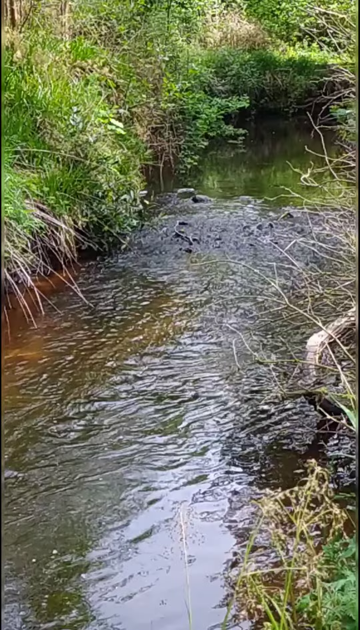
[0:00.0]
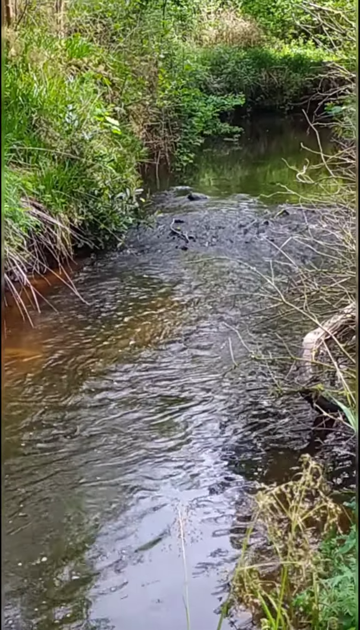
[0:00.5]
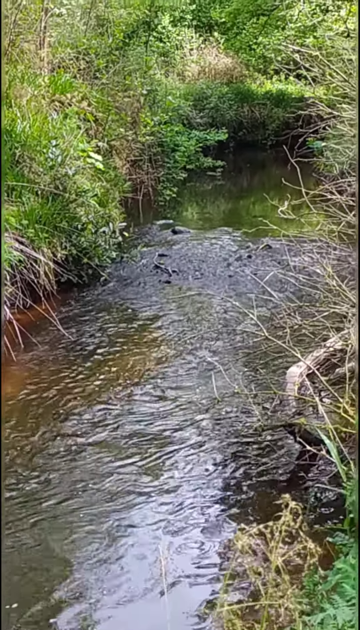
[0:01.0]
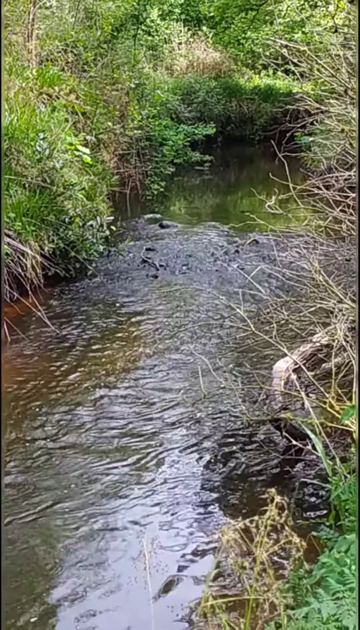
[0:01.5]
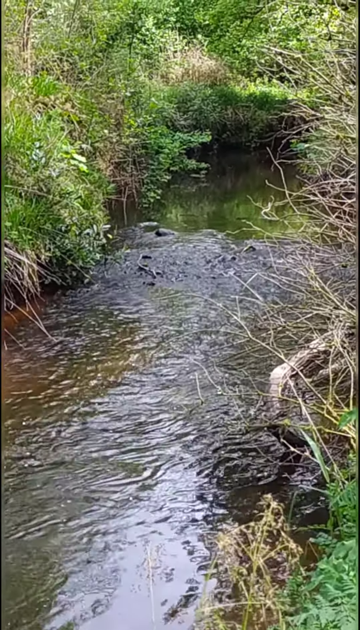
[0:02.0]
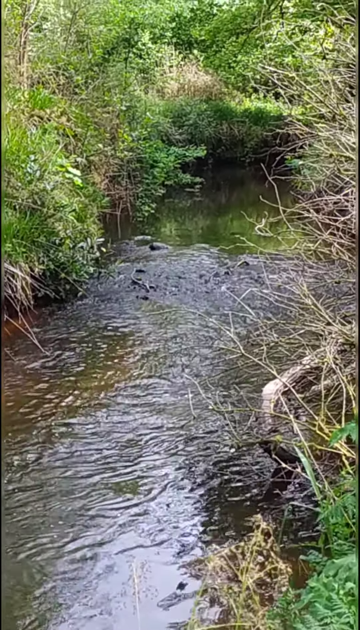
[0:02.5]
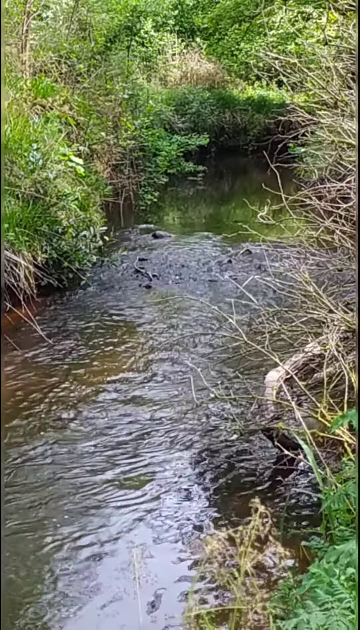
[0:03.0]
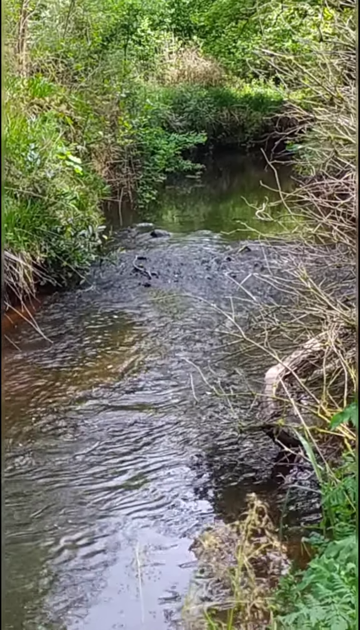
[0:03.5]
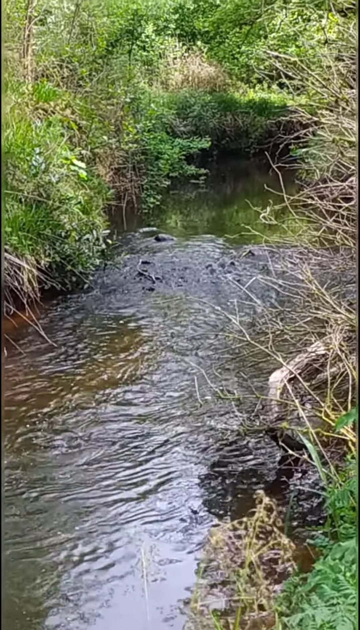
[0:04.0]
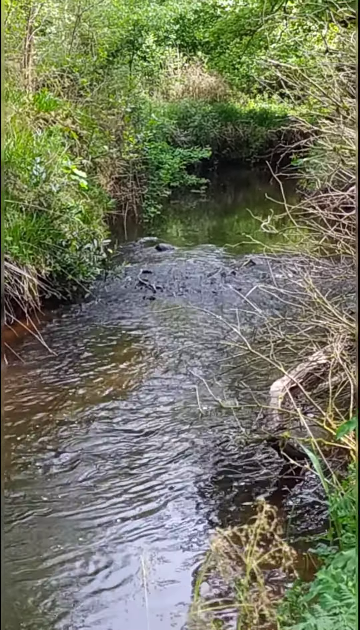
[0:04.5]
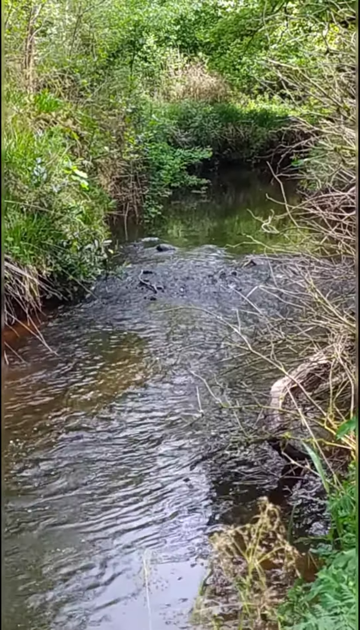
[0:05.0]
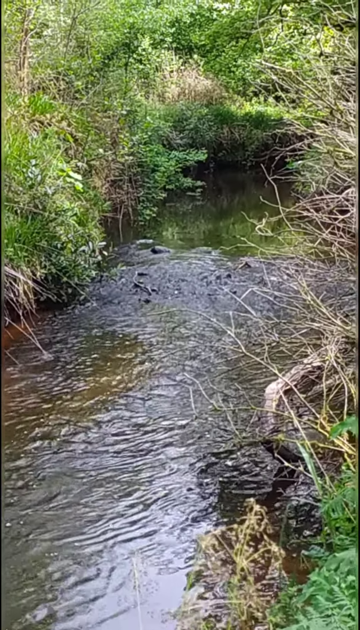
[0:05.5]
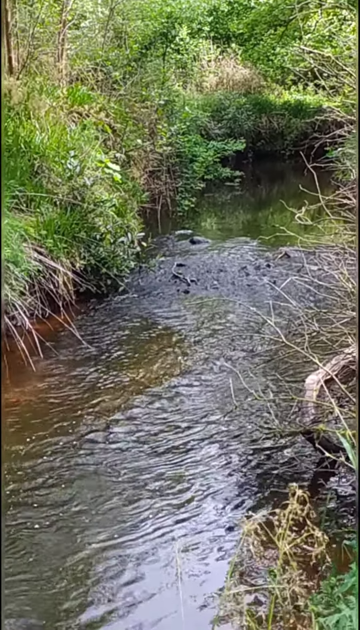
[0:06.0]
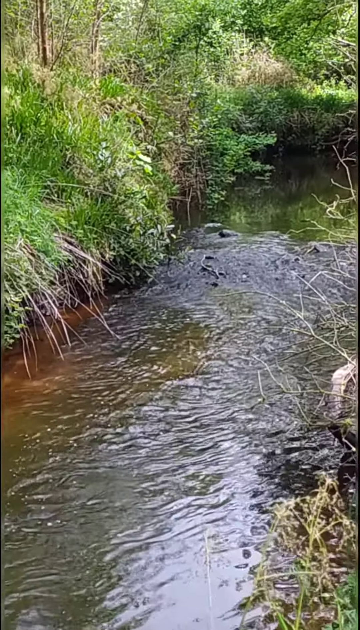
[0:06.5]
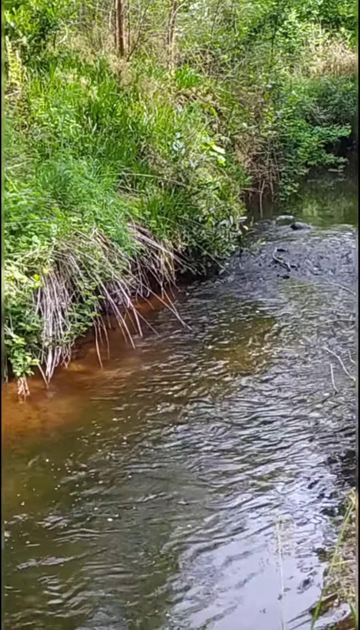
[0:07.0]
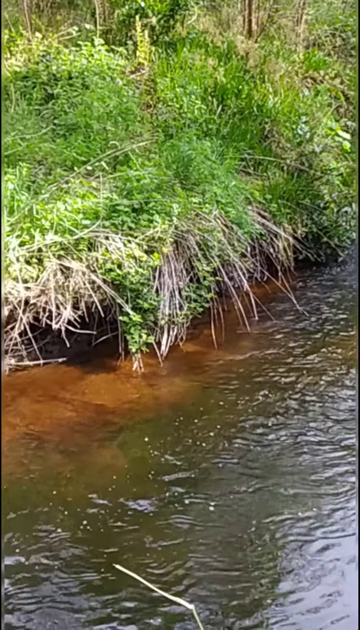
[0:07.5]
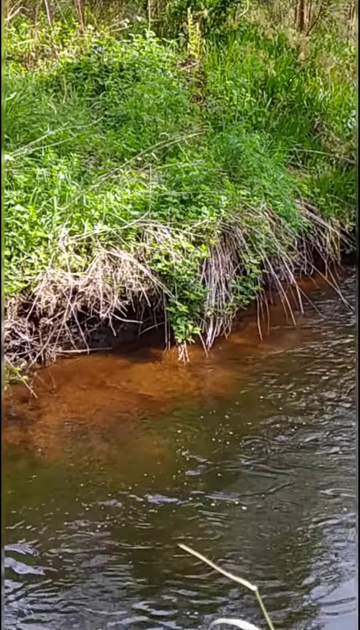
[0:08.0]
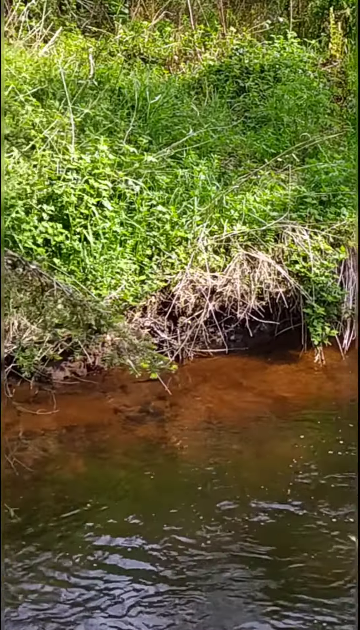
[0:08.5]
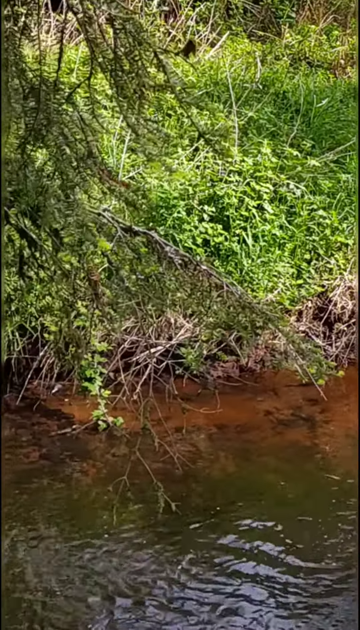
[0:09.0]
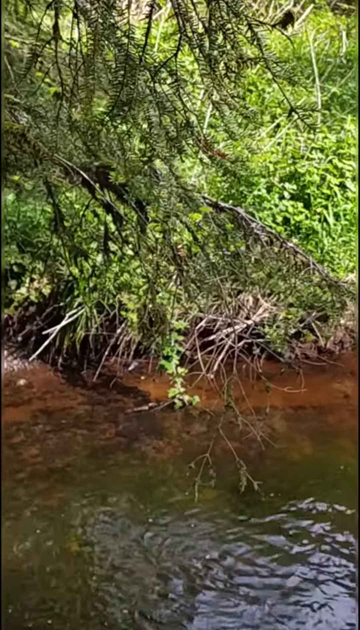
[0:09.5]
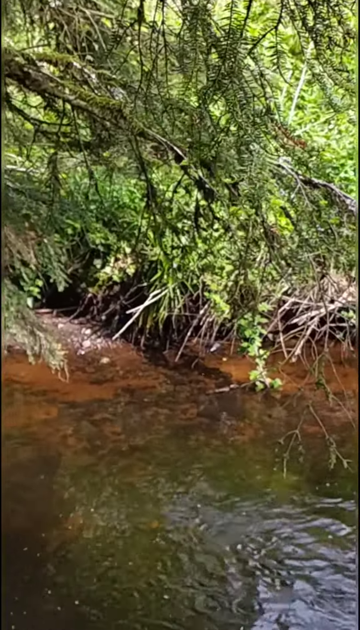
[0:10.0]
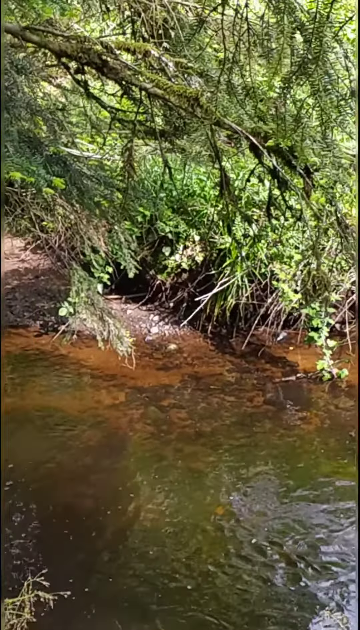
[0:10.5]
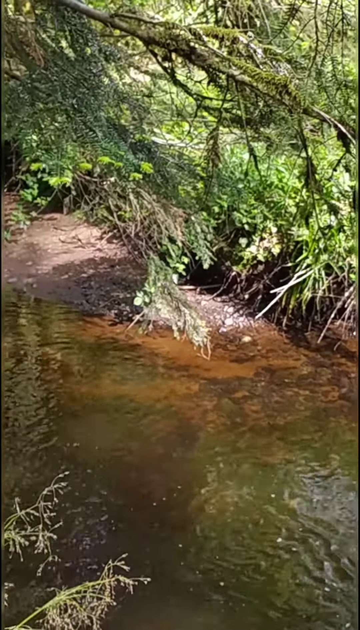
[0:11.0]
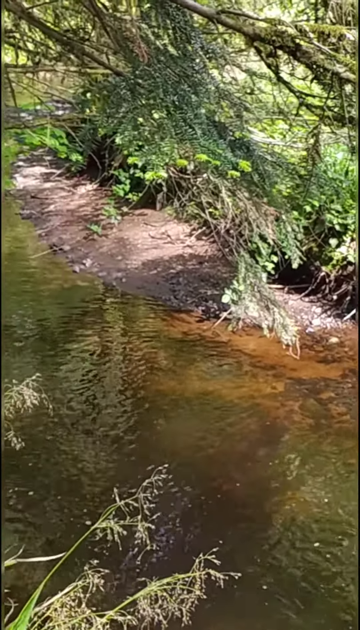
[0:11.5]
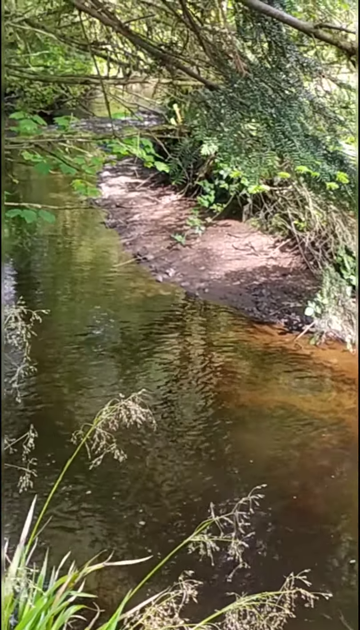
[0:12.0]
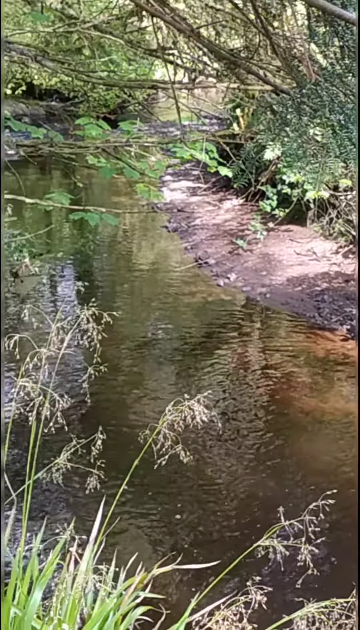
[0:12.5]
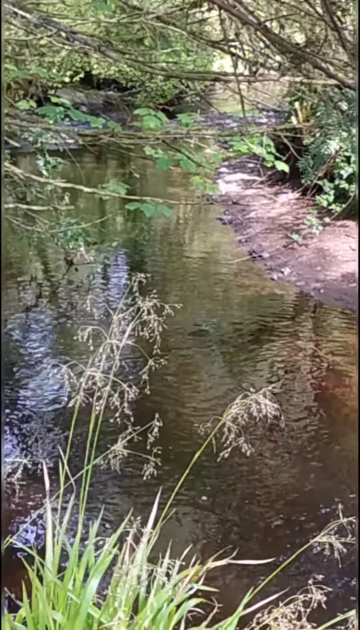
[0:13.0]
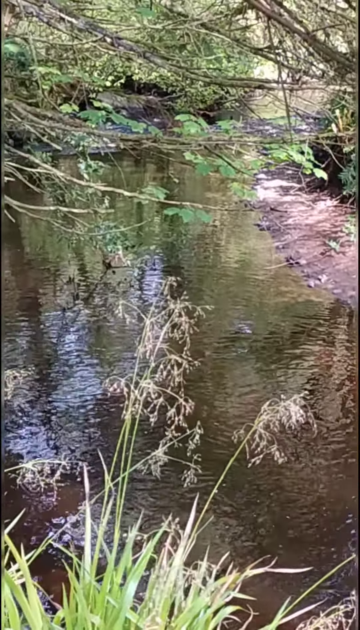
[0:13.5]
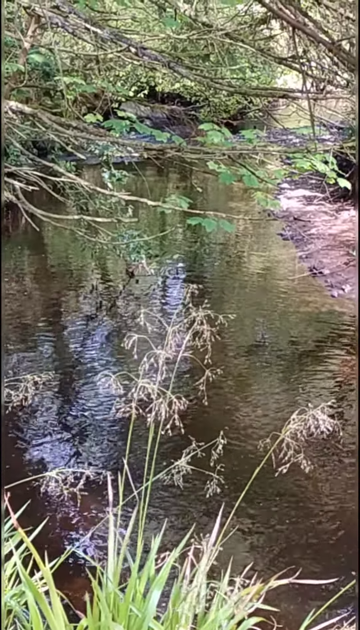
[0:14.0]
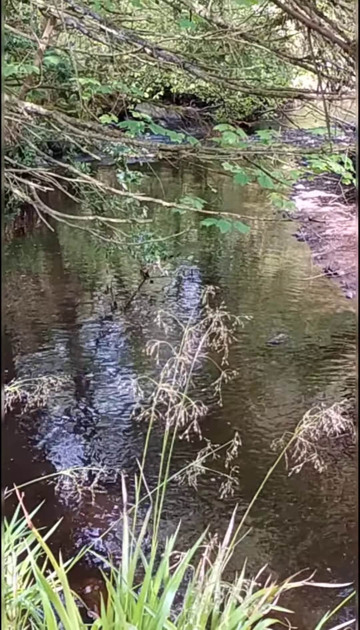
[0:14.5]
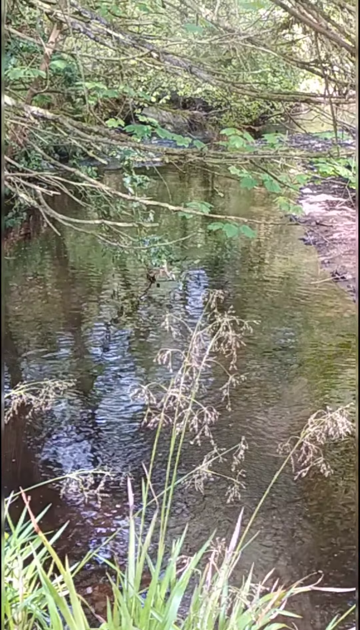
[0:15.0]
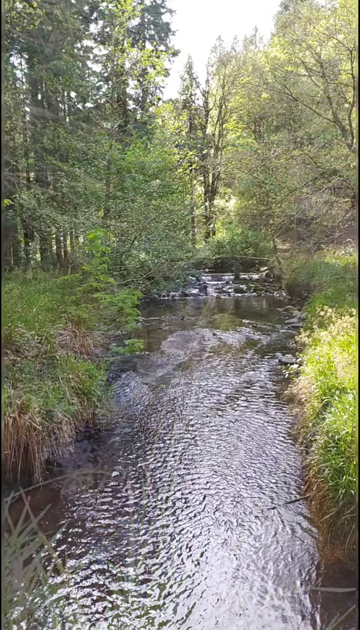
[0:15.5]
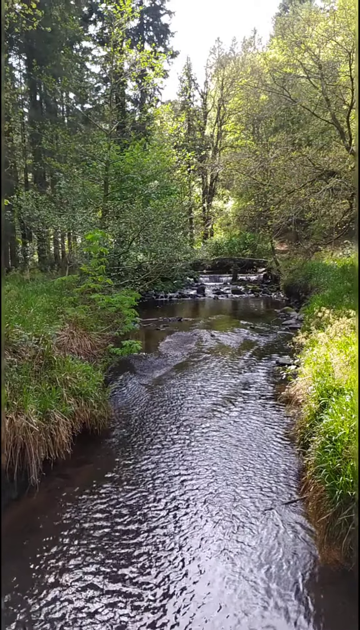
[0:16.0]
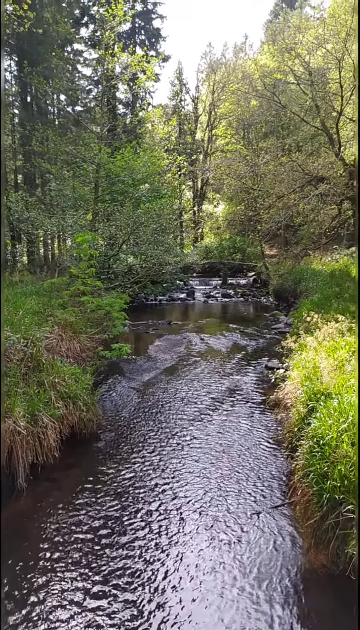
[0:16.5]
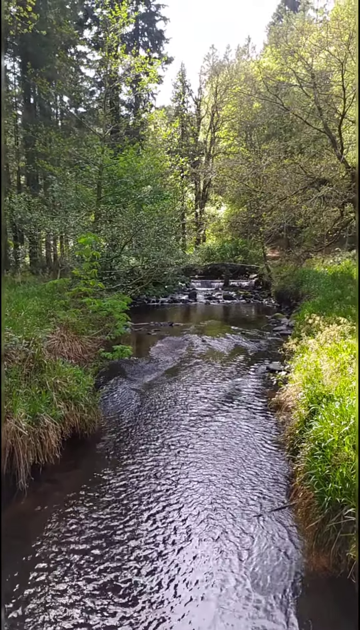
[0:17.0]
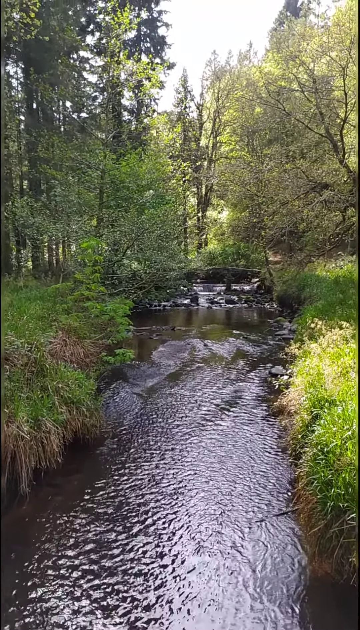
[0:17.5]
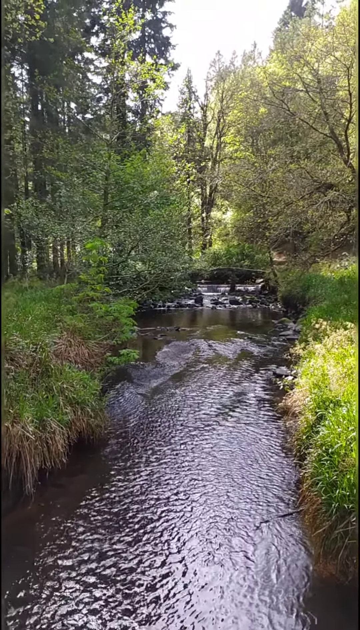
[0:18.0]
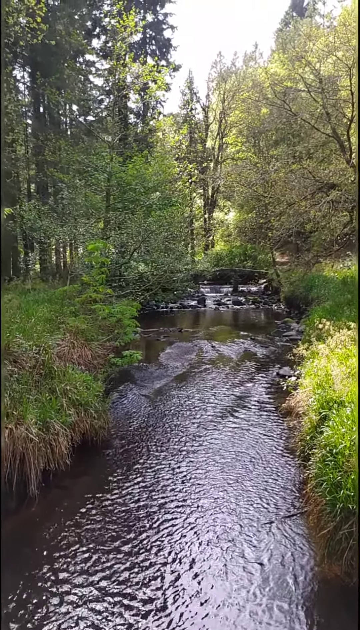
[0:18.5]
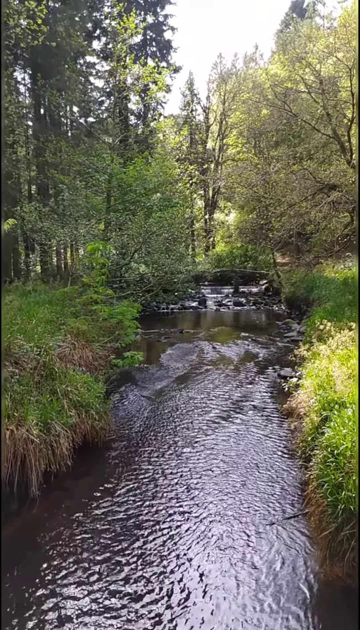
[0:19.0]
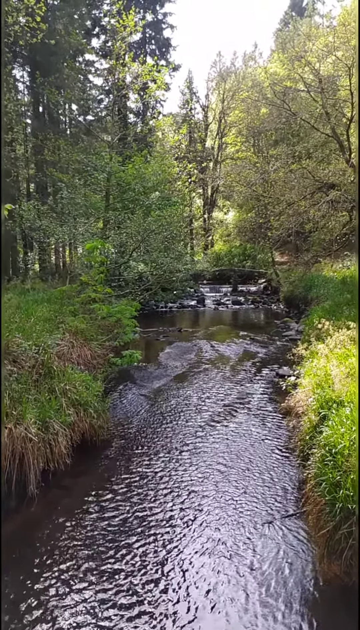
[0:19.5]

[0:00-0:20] What appears to be cell phone footage shows a small creek with dense foliage on both sides and ripples in the center. Small rocks are visible just above the surface of the water. The creek appears to be flowing toward the person filming. The camera pans to the left, showing the leftward flow of the creek; as it pans, some sand is visible on the right bank toward the left side, and very tall reeds are shown overhanging the creek, along with some taller trees. A flash acts as a transition to a different view of a creek, where the sides of the bank are steeper and in the background there appears to be water rolling over a rockier, higher area, with trees in the background beyond it. The camera focuses on this for a moment.